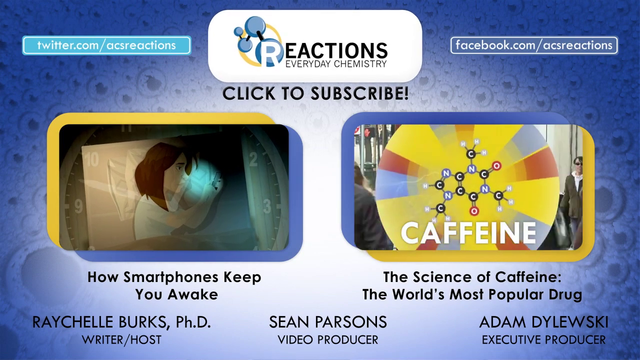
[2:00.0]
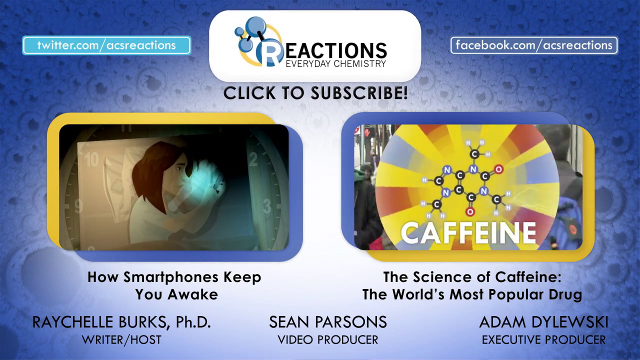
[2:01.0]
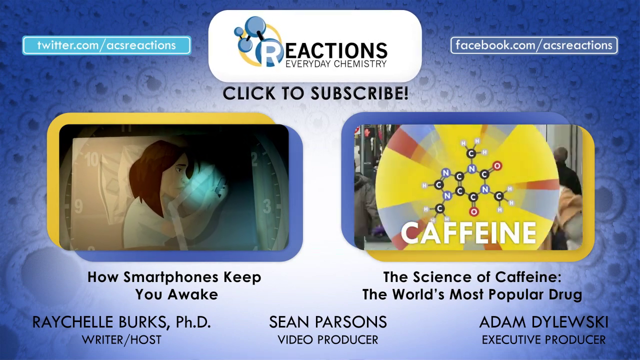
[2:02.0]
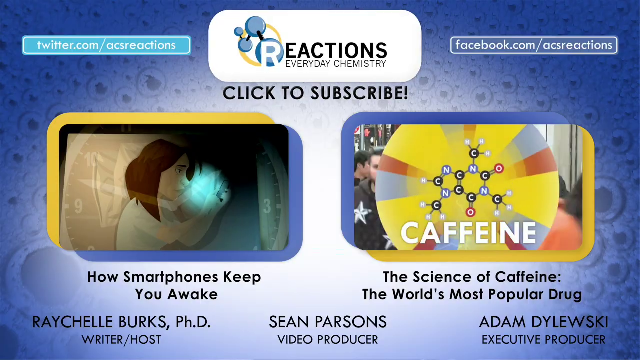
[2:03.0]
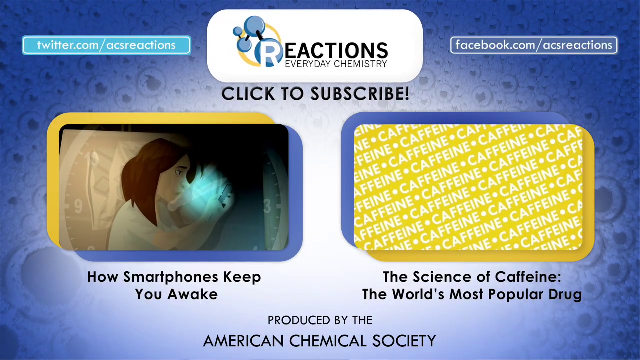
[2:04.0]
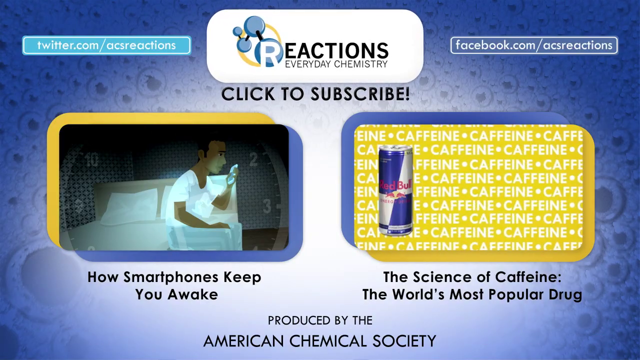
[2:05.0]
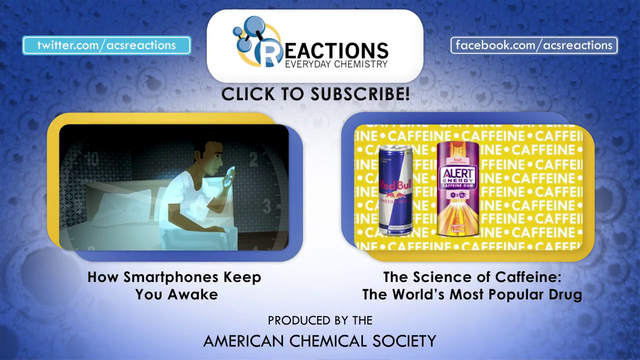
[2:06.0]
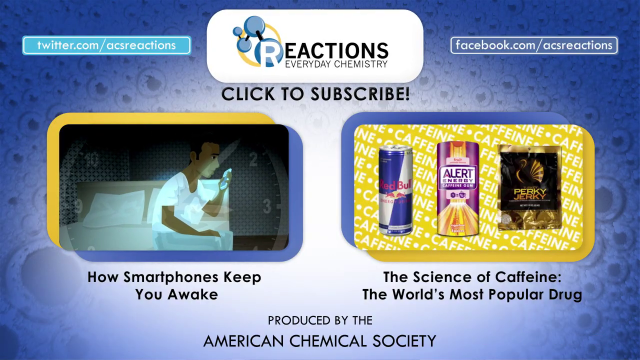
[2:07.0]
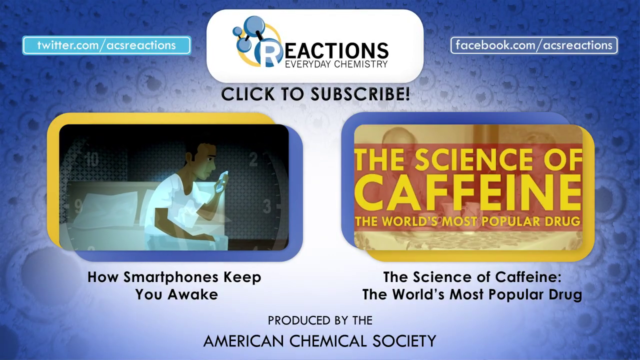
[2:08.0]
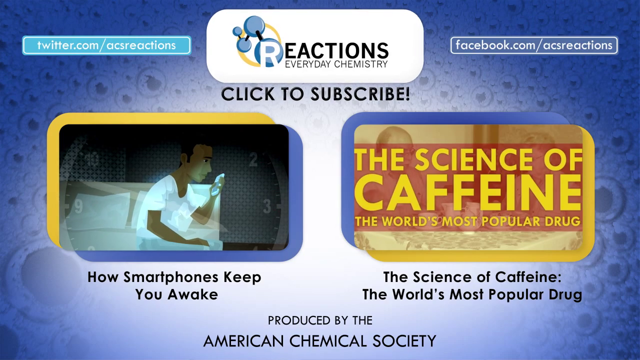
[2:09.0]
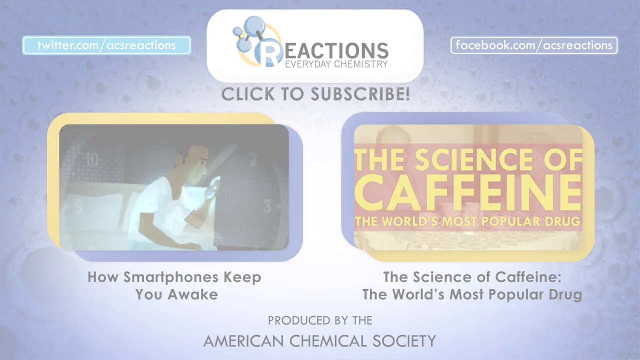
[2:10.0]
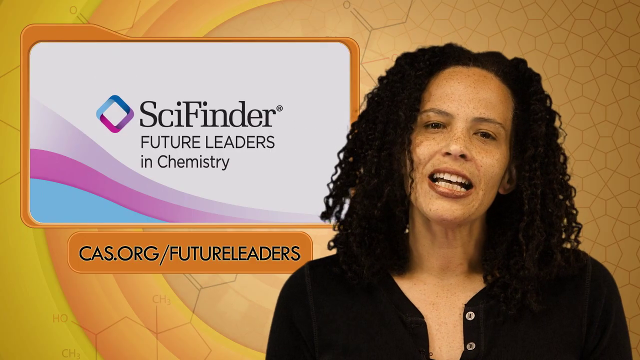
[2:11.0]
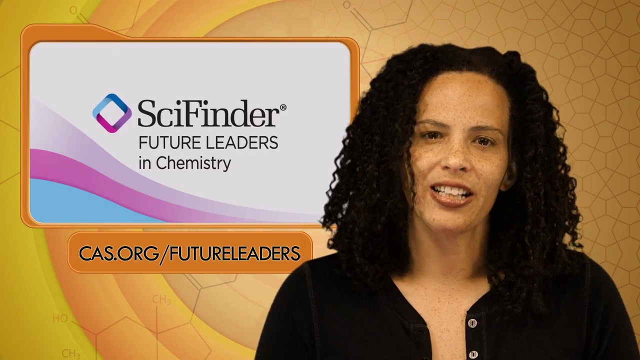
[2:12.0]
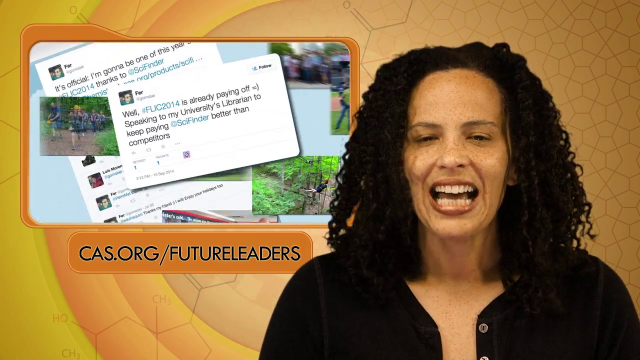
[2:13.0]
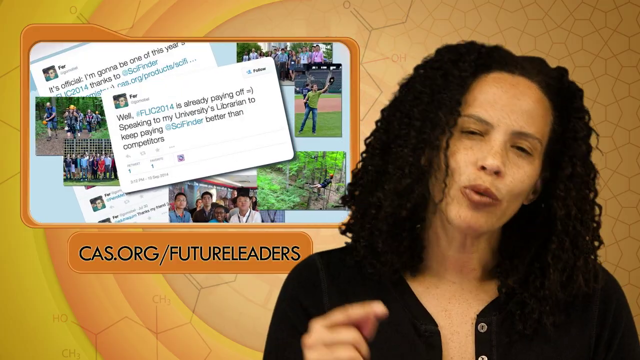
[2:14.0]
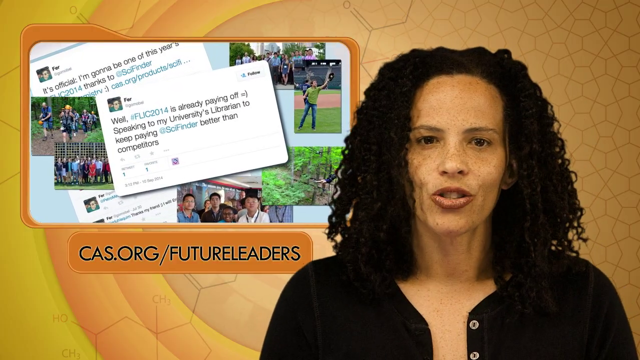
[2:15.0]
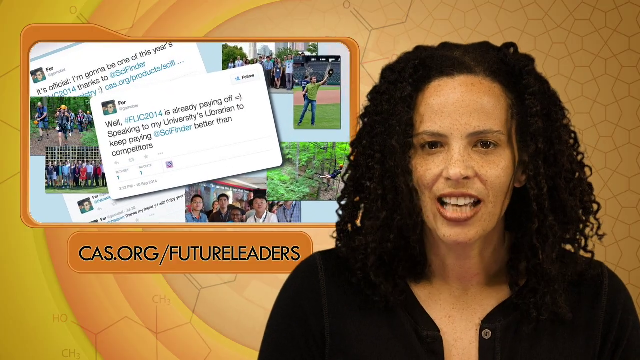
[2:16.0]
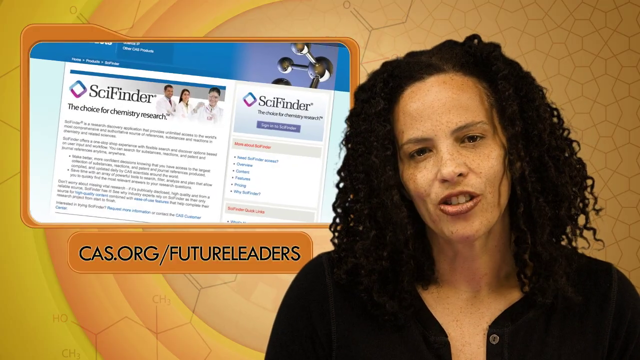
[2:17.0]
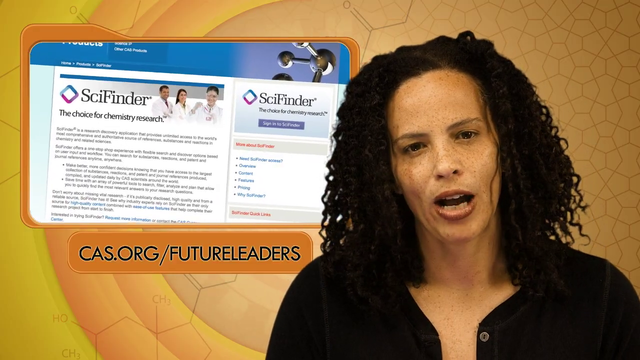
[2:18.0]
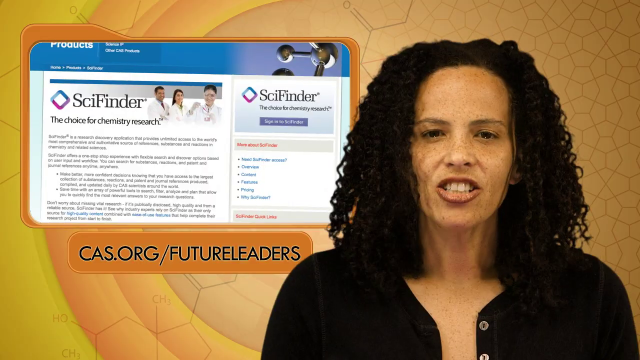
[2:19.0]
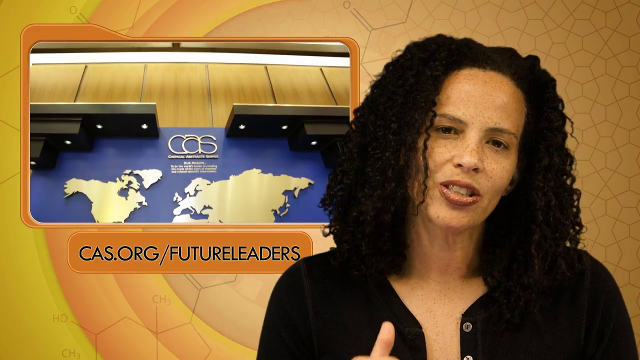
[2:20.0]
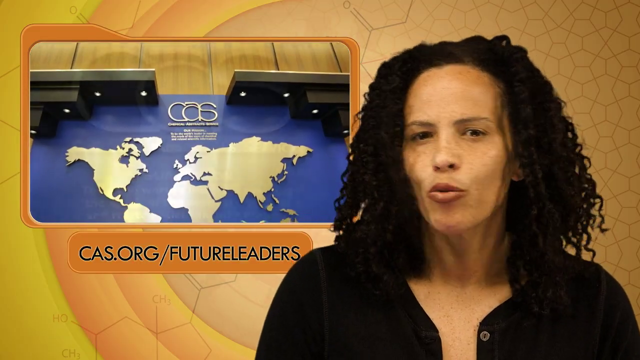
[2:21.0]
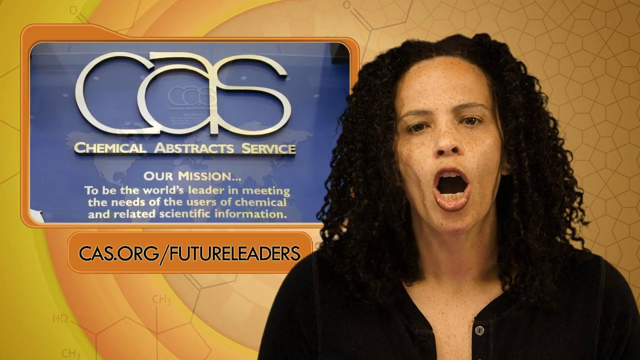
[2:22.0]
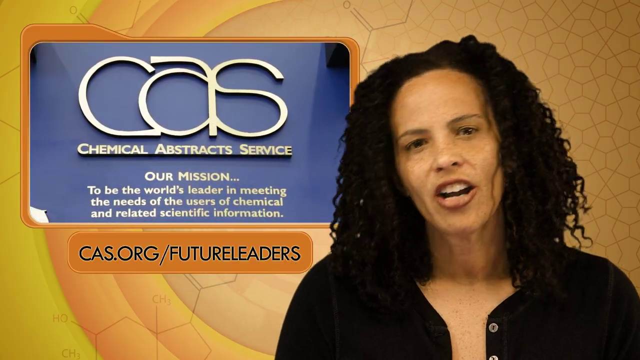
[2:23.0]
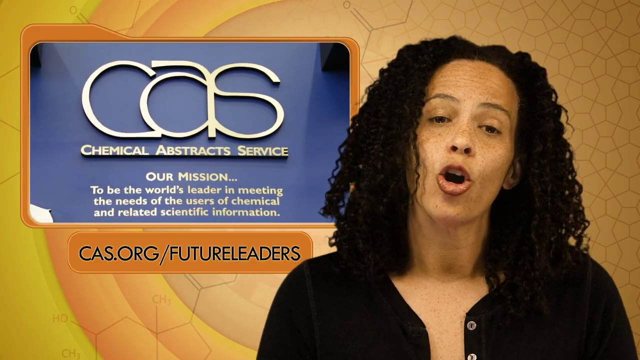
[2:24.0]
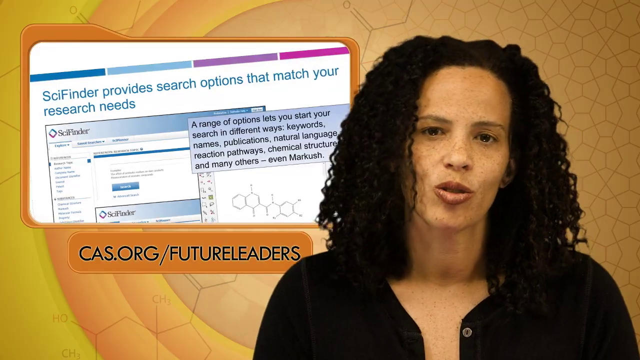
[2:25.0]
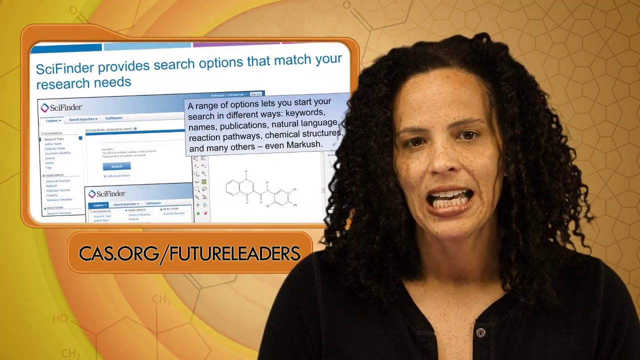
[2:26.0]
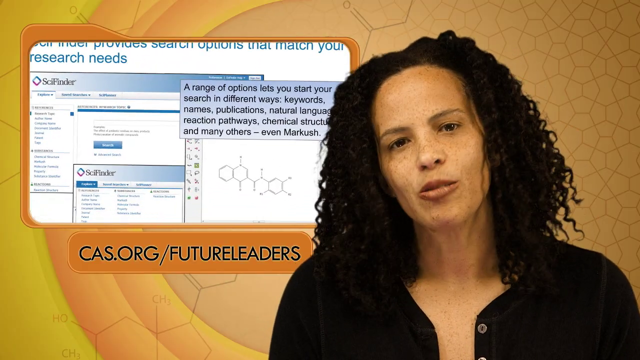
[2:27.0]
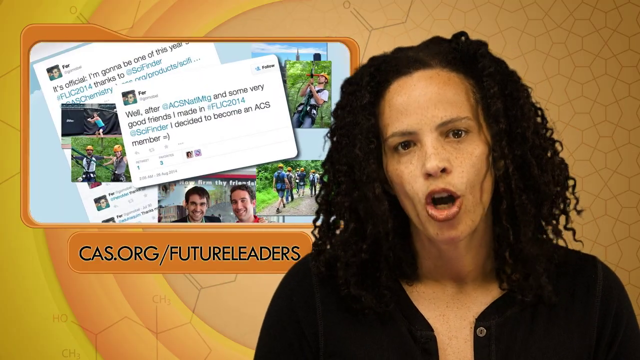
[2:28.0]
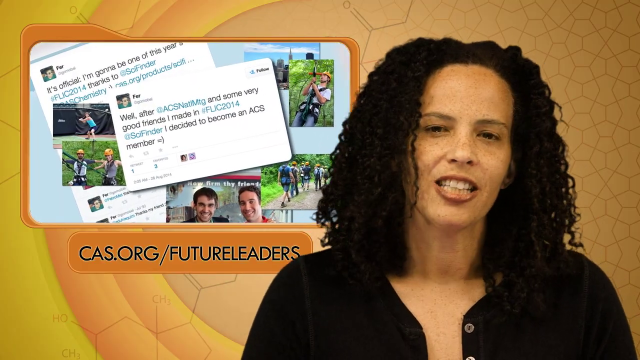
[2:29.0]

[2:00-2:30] At the top center is the title "Reactions, Everyday, Chemistry" above the two videos, the left one titled "How Smartphones Keep You Awake" underneath and the right one titled "The Science of Caffeine, the world's most popular drug" underneath. The scene changes to the woman on the right, looking at the viewer and speaking, and a screen on the left with the words "SciFinder, Future Leaders in Chemistry" in the middle and the website "CAS.org, Future Leaders" below. A collage of photographs and posts appears on the left, followed by a SciFinder webpage. A picture of the world appears on the left, then the logo of CAS with "Chemical Abstracts Service" underneath the letters, then a SciFinder webpage, and then a collage of scattered pictures and posts from a social media website.